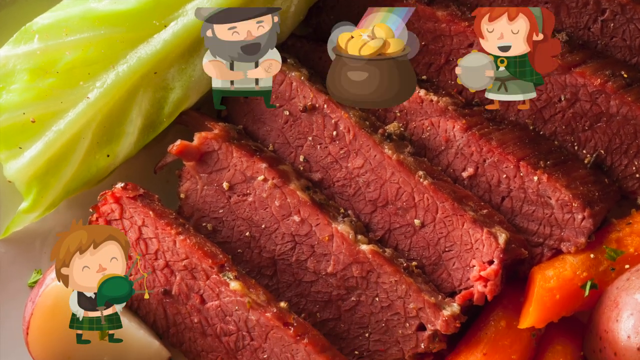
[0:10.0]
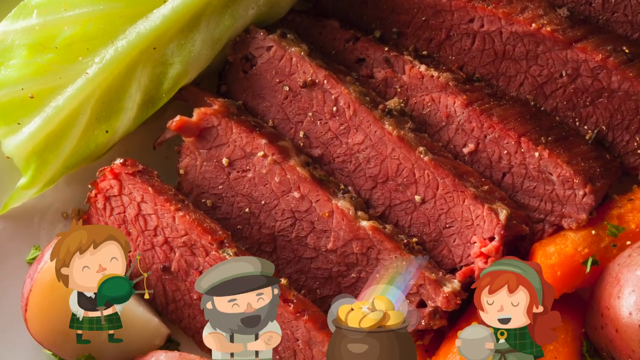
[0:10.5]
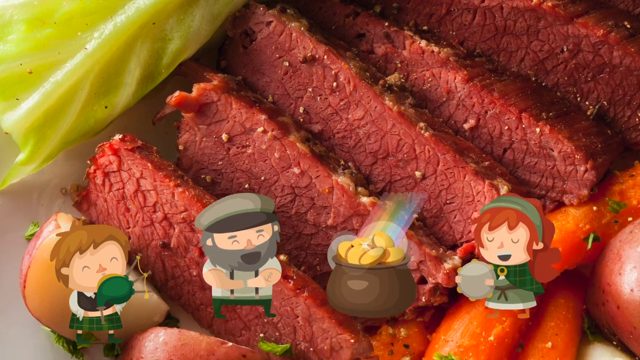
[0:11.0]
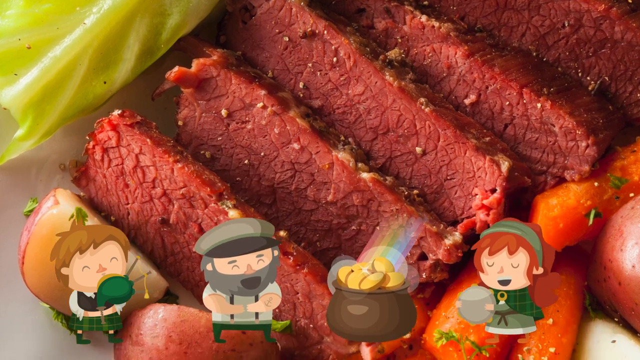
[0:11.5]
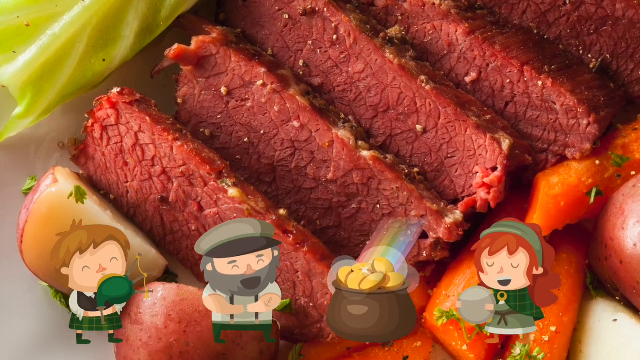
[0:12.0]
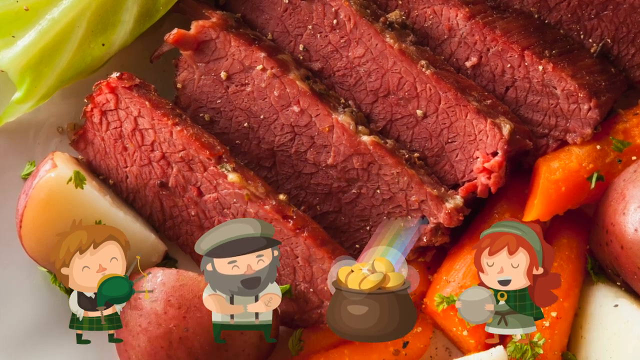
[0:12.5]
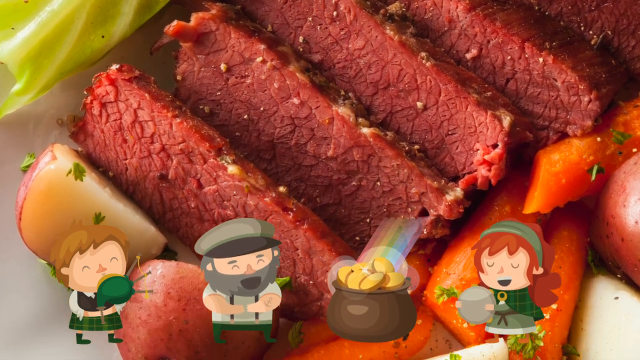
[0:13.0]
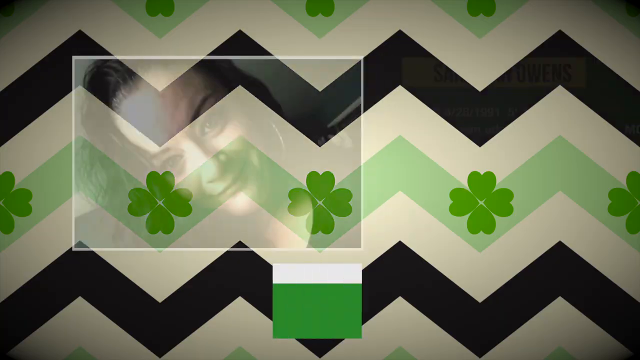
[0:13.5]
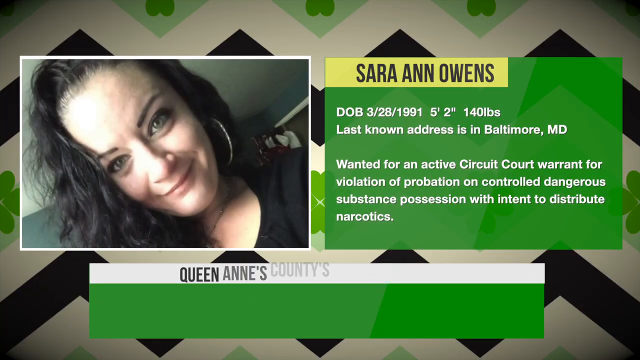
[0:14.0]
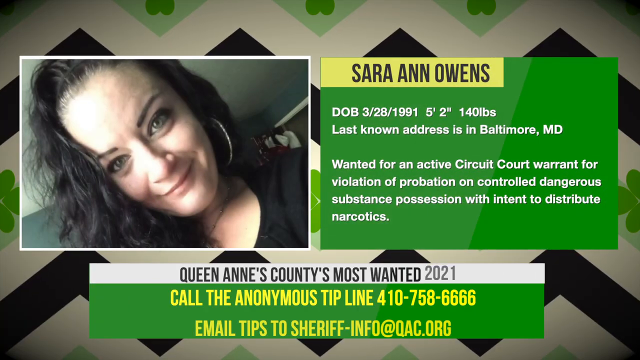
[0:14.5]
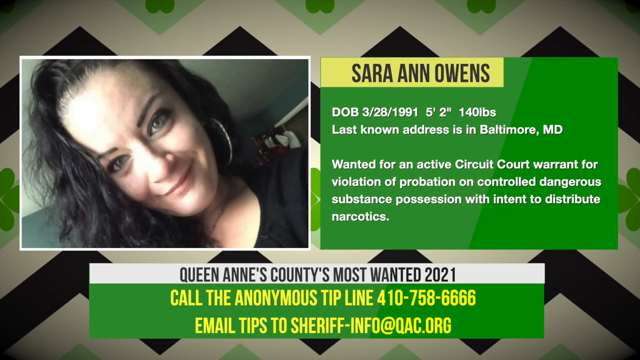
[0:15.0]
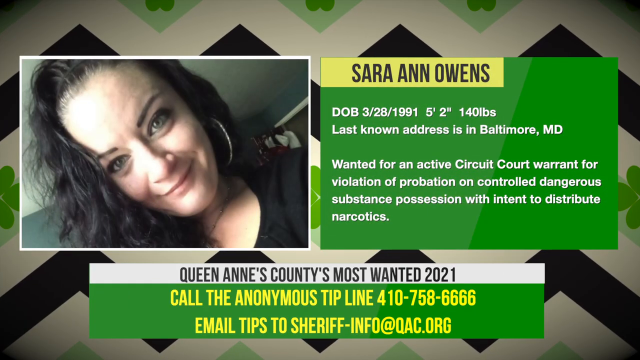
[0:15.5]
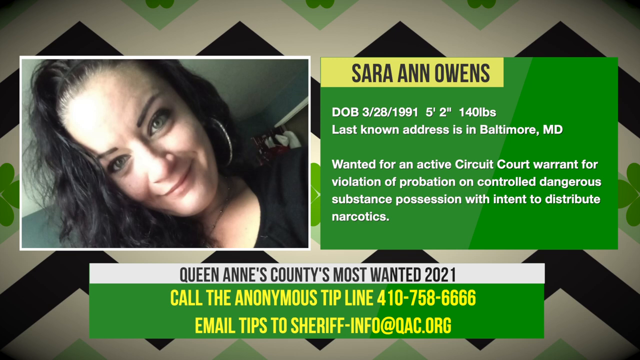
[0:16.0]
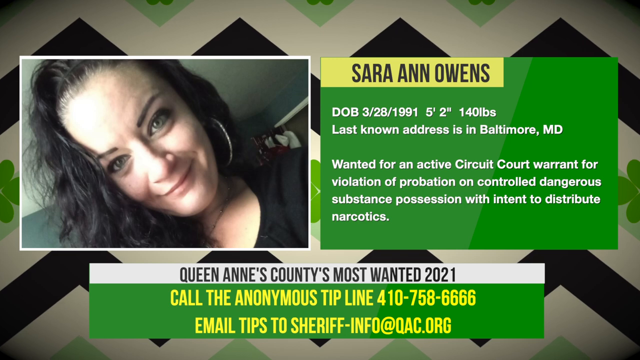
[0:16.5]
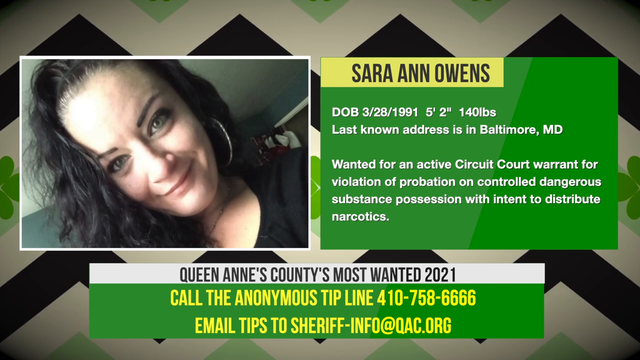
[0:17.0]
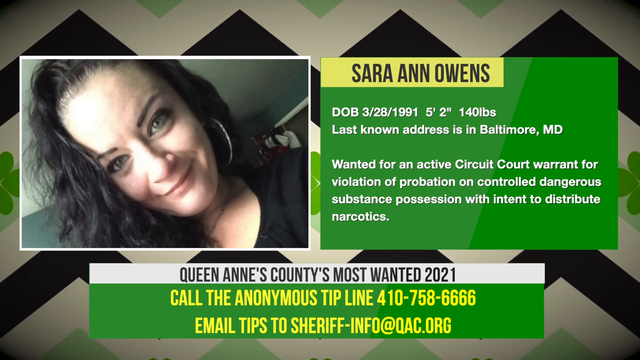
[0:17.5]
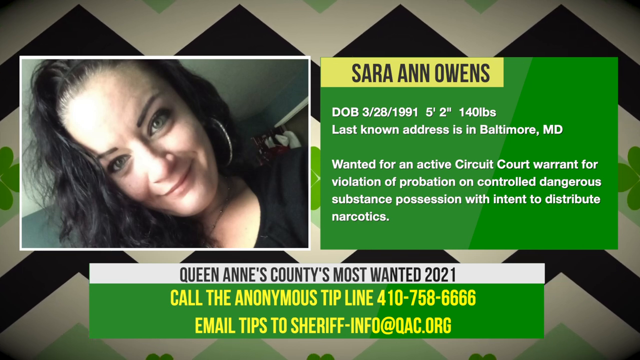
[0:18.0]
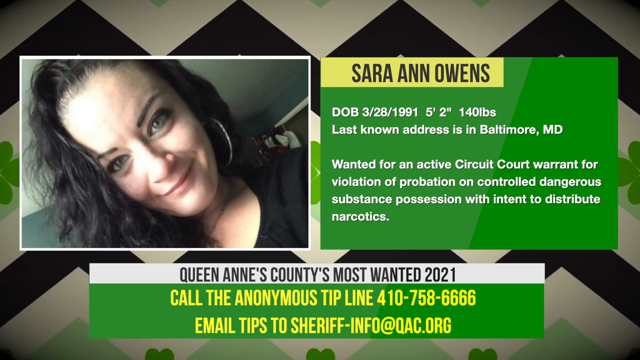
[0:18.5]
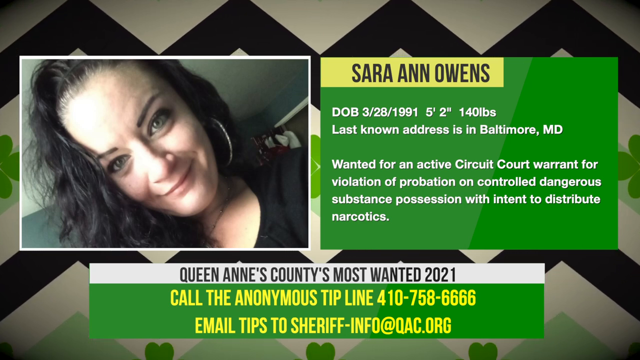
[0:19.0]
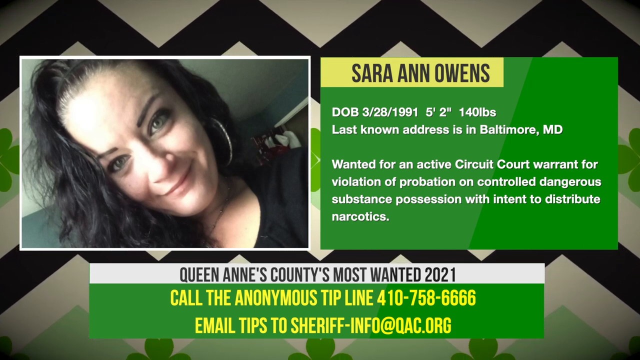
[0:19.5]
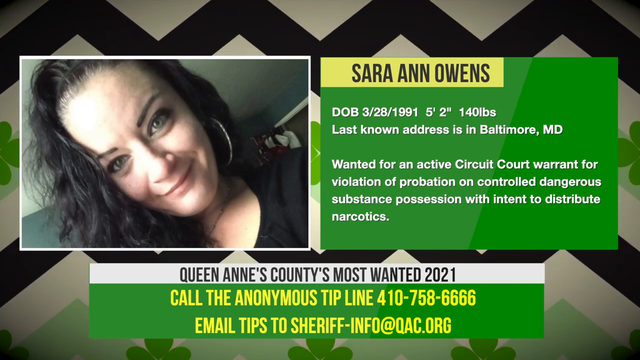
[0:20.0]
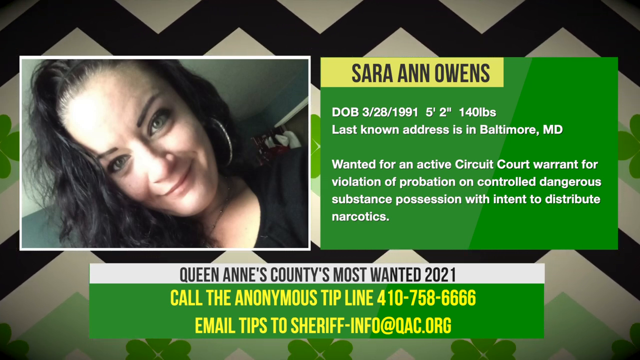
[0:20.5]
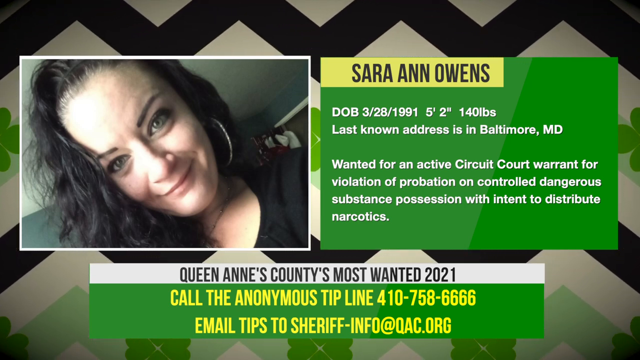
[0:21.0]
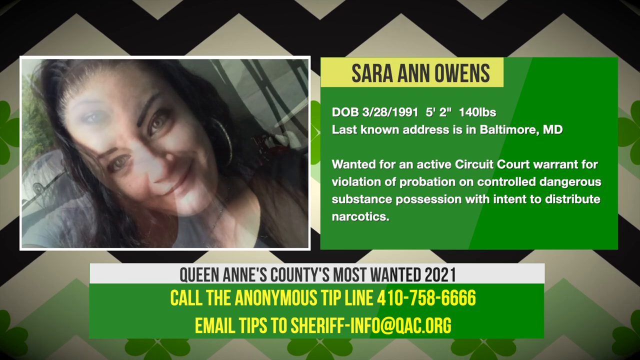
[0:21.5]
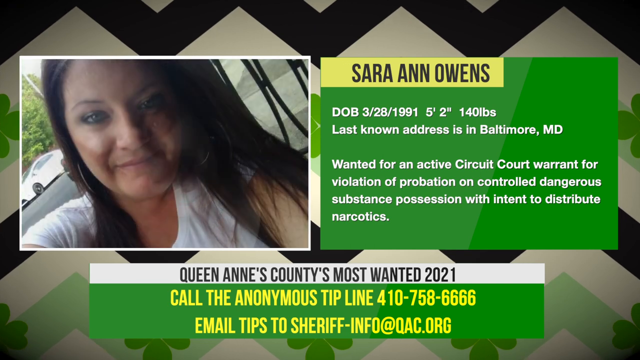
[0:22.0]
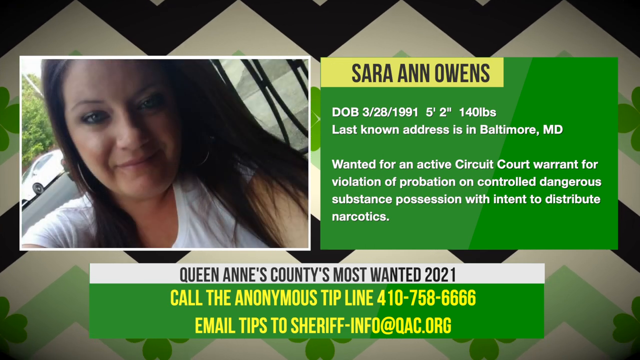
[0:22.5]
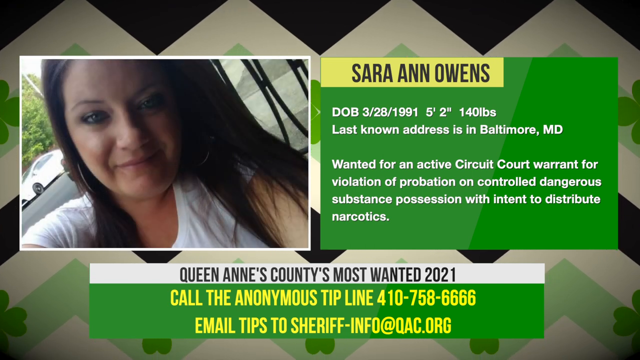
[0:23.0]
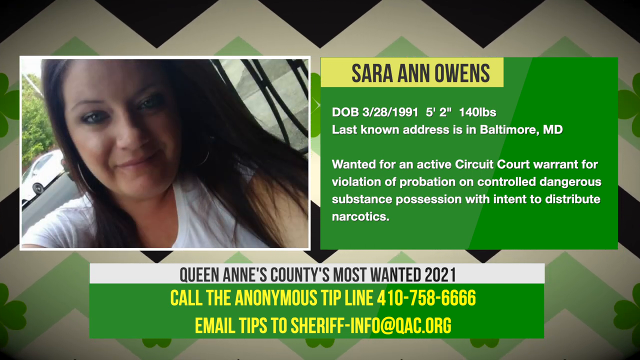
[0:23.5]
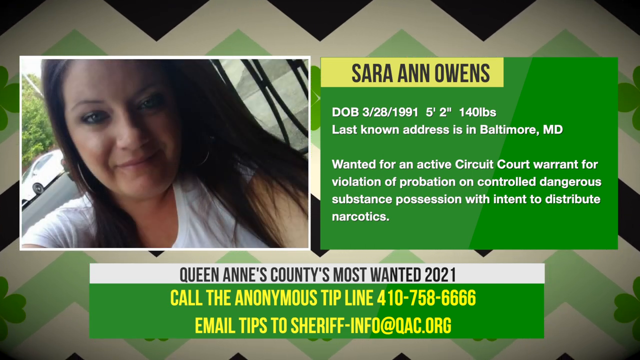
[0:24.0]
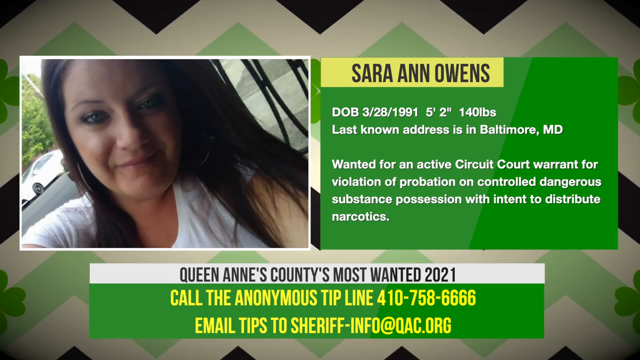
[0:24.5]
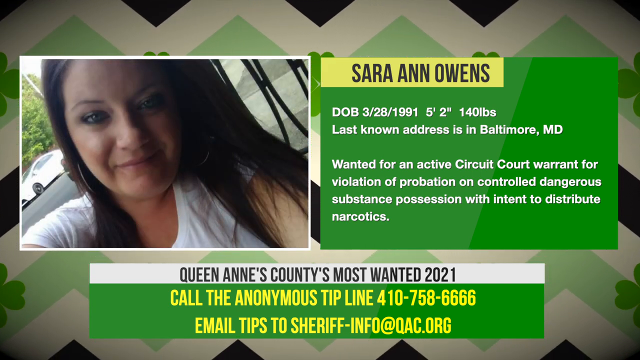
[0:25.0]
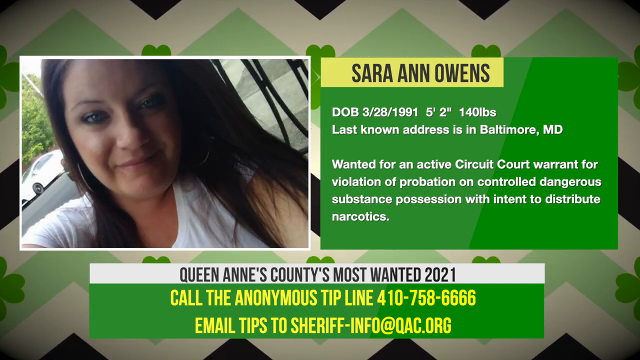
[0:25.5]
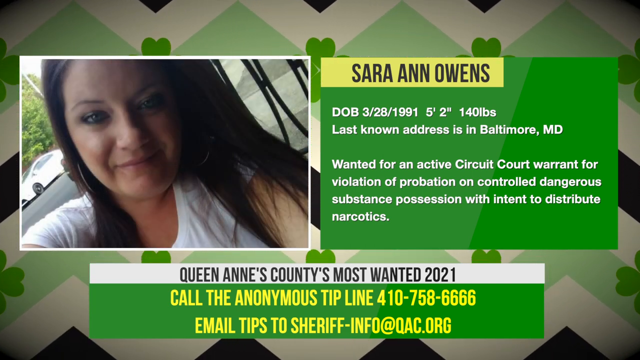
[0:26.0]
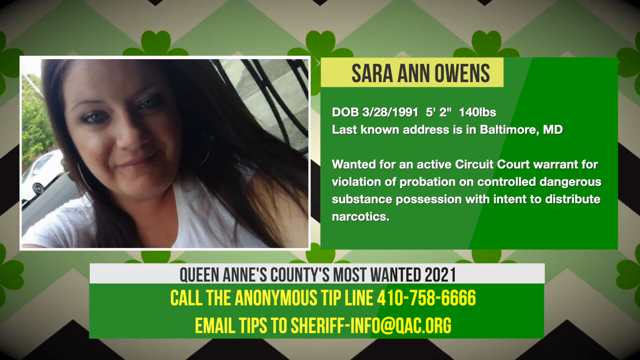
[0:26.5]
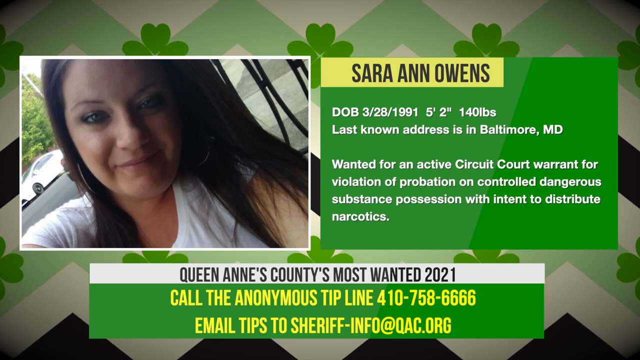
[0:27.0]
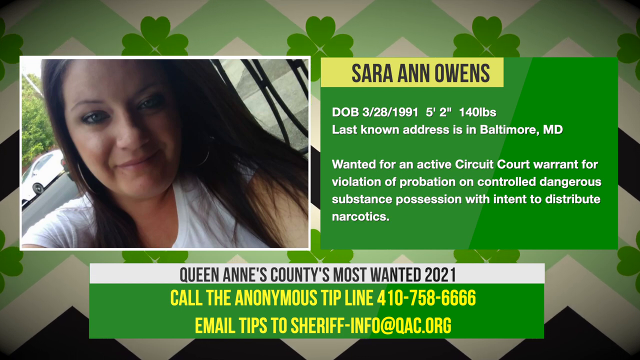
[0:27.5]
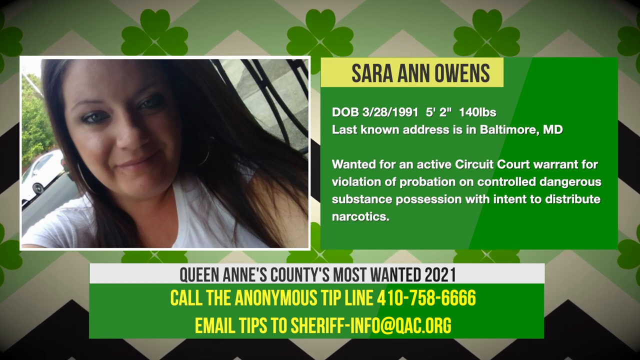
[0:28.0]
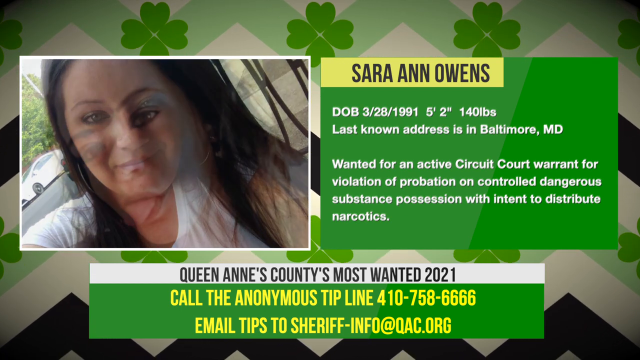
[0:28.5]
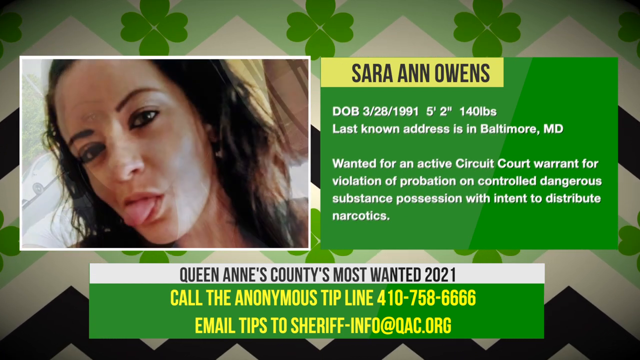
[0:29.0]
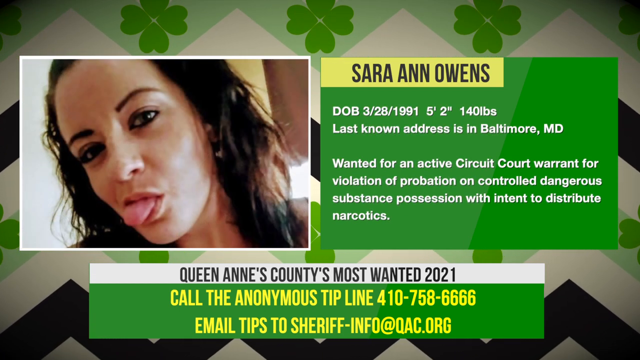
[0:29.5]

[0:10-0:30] Graphics move down from the top of the screen and stop in the lower half of the frame. They depict a man playing a horn, another man with a gray beard wearing a green beret with a black visor, a brown pot with gold inside, and a person with red hair wearing a green cloak and a green bandana. In the background is a plate with food. Rectangular banners then appear: the one on the left contains some photographs of a woman, while the right window holds writing, white on green and black on yellow. At the bottom of the frame, another rectangular window contains lines of yellow text on a green background and black text on a white background.